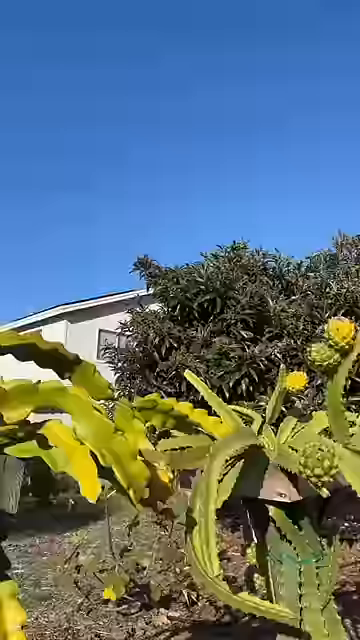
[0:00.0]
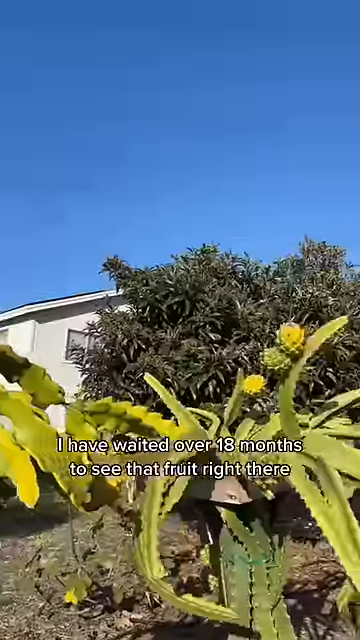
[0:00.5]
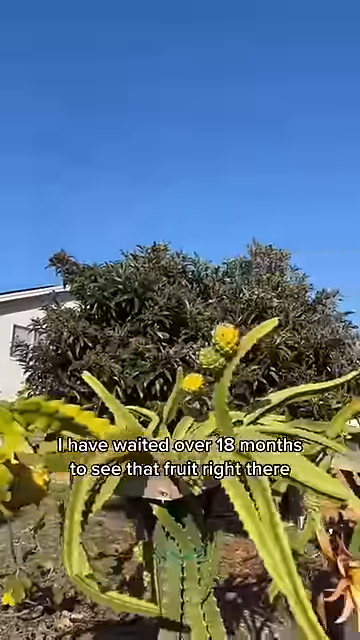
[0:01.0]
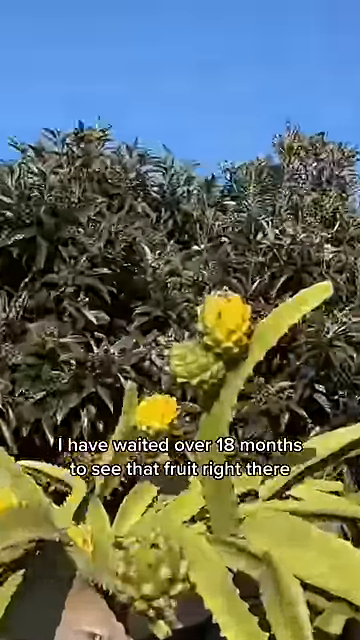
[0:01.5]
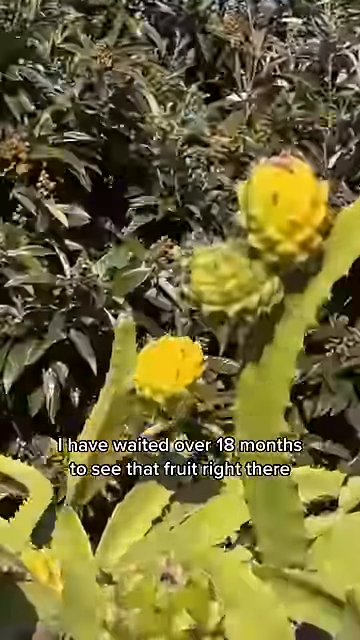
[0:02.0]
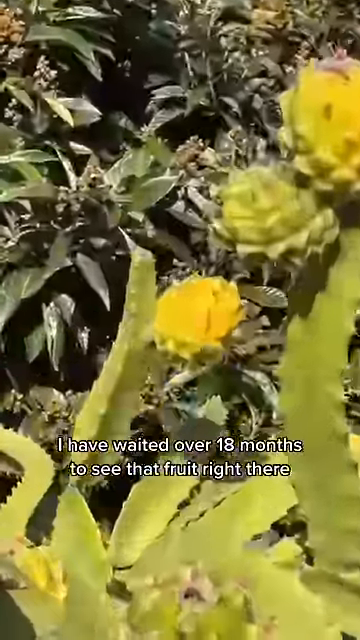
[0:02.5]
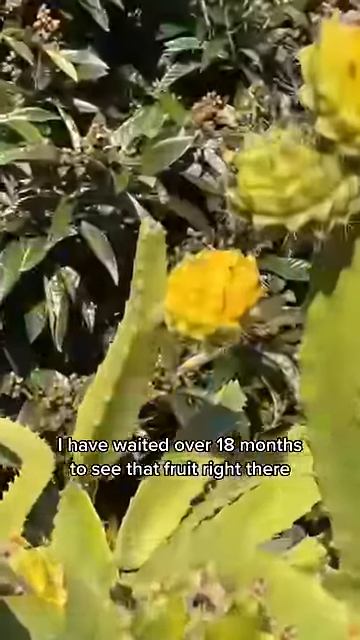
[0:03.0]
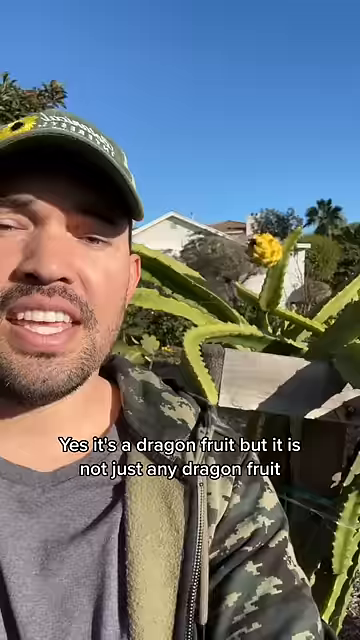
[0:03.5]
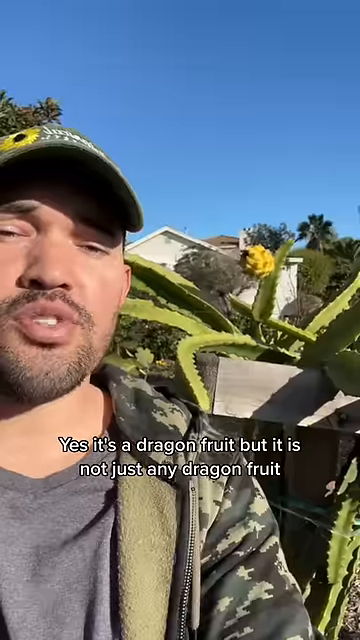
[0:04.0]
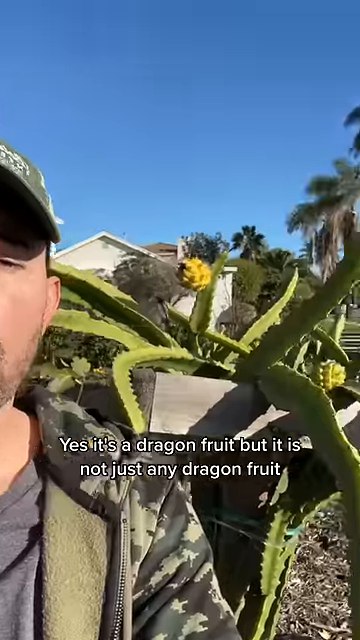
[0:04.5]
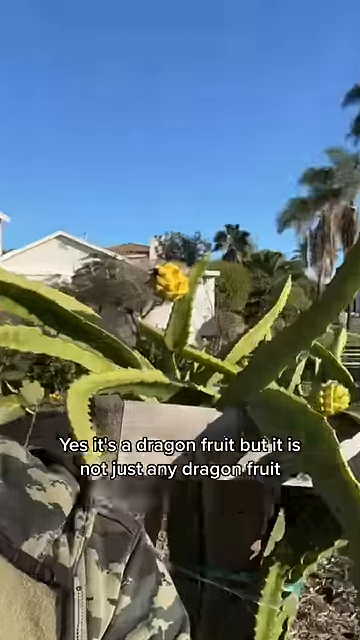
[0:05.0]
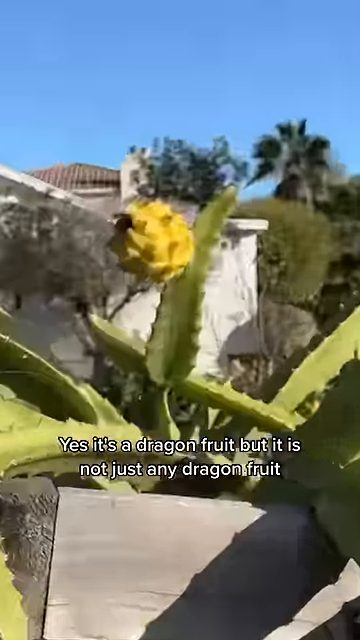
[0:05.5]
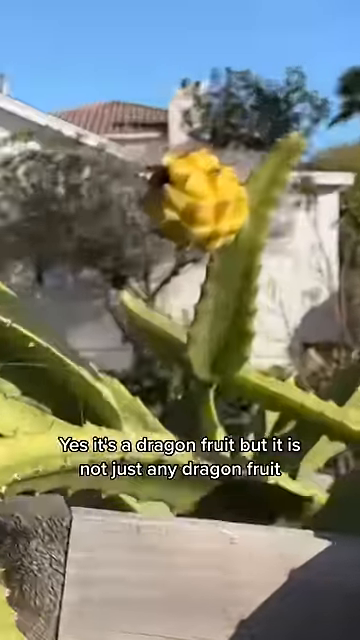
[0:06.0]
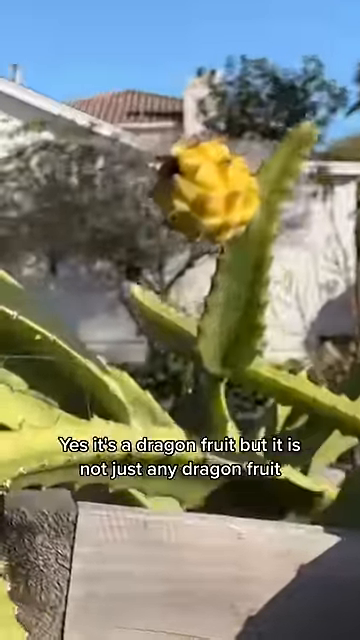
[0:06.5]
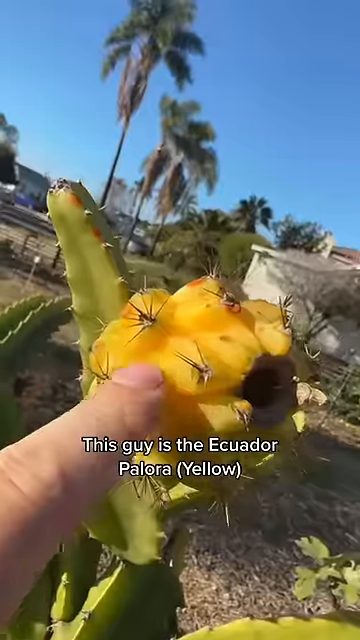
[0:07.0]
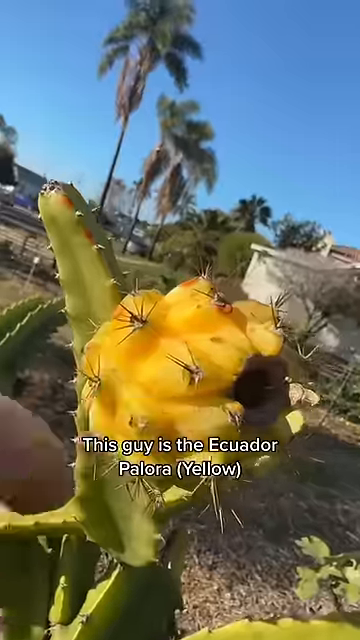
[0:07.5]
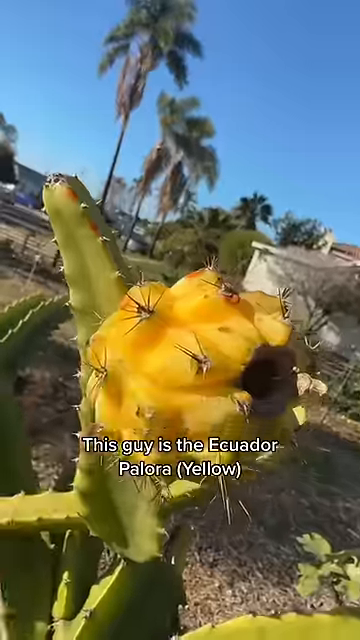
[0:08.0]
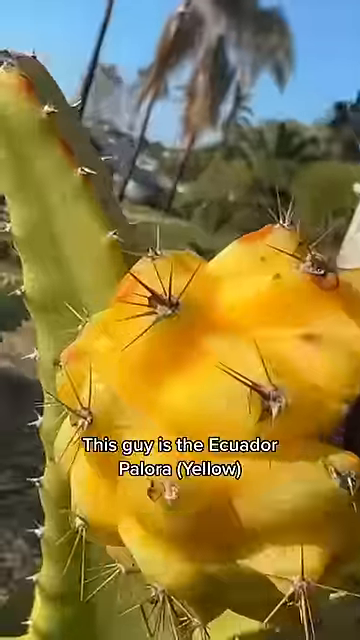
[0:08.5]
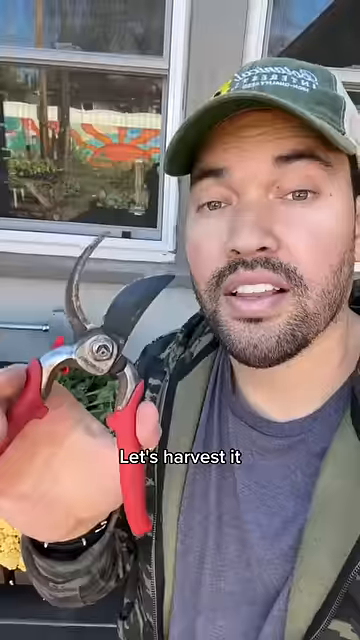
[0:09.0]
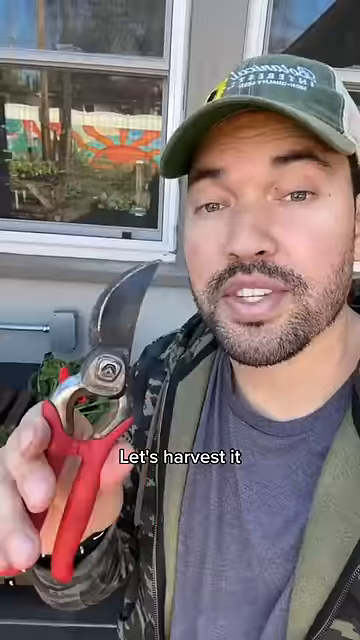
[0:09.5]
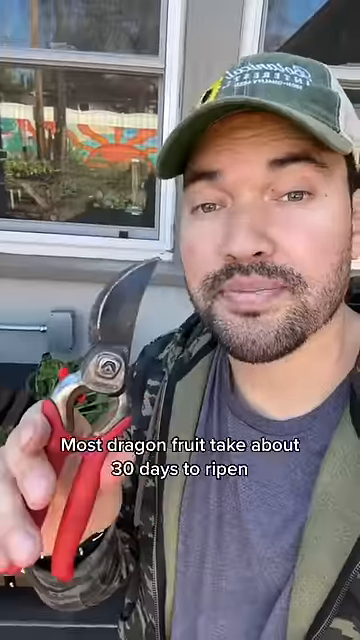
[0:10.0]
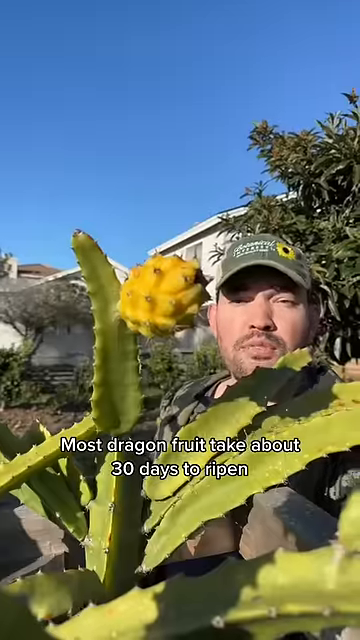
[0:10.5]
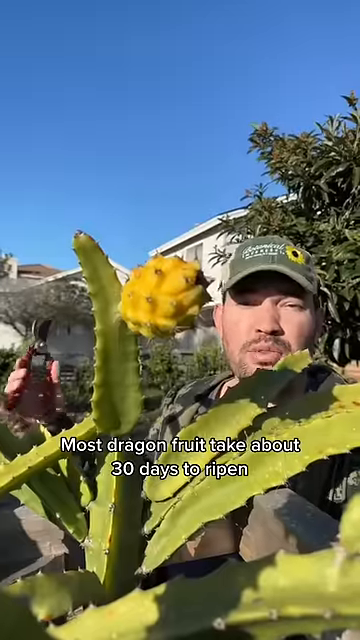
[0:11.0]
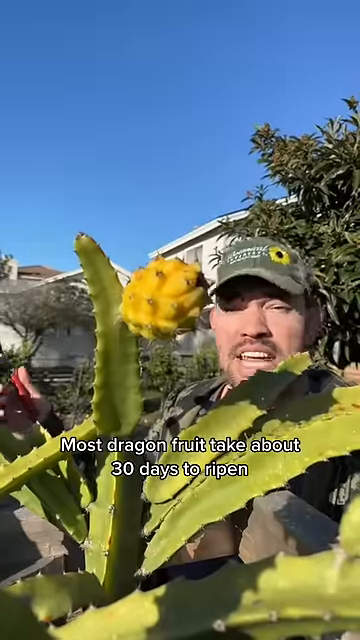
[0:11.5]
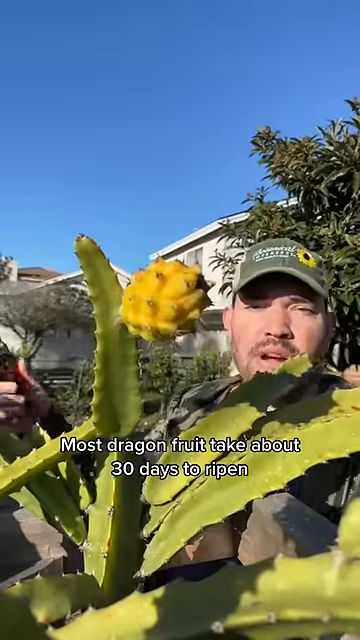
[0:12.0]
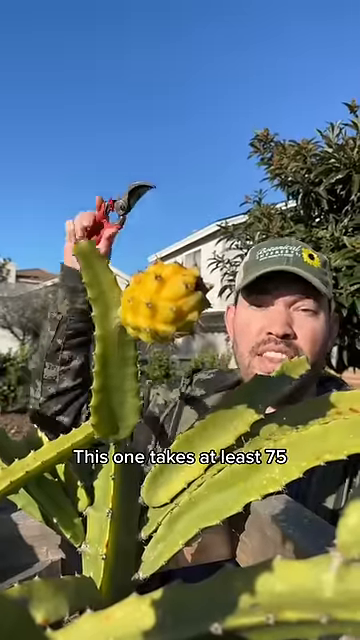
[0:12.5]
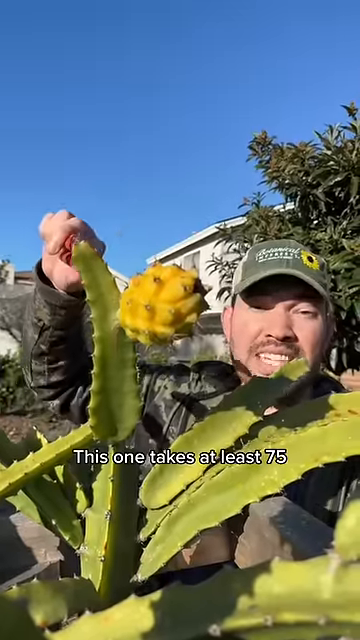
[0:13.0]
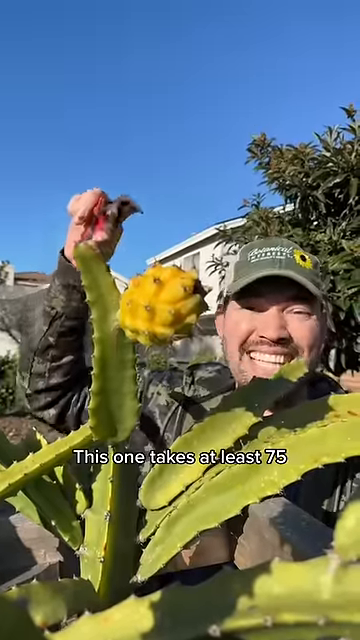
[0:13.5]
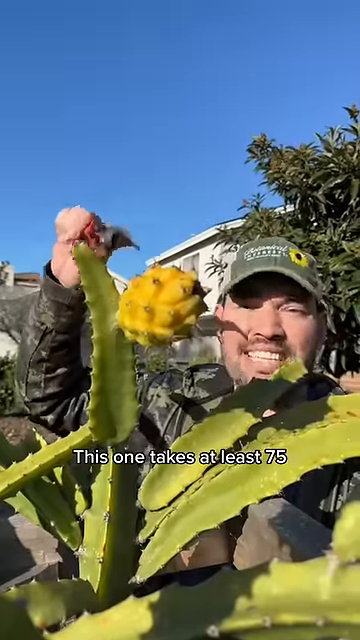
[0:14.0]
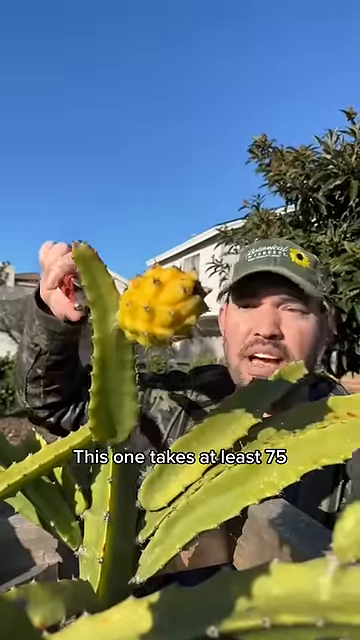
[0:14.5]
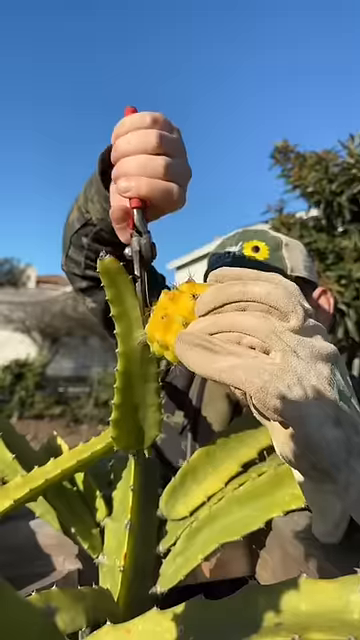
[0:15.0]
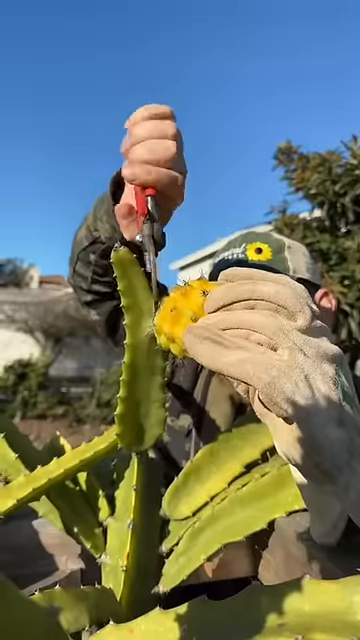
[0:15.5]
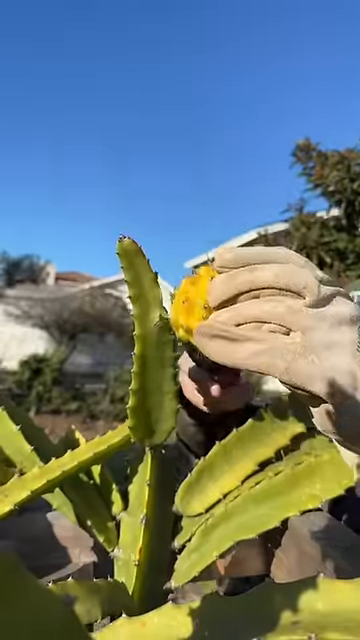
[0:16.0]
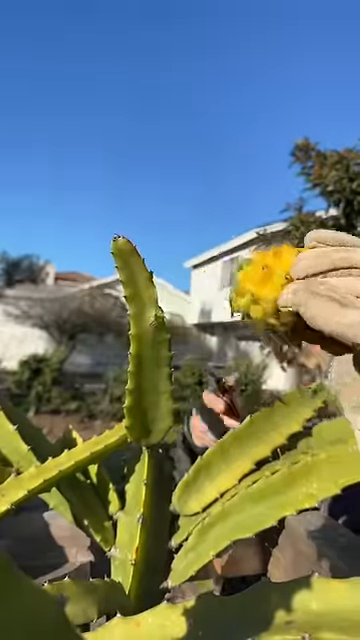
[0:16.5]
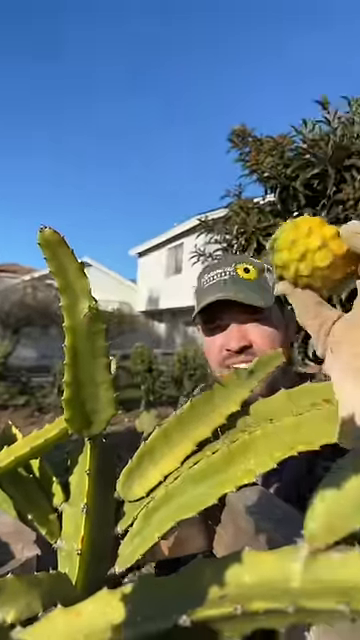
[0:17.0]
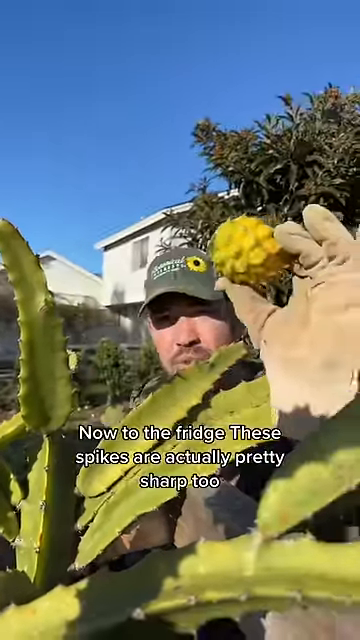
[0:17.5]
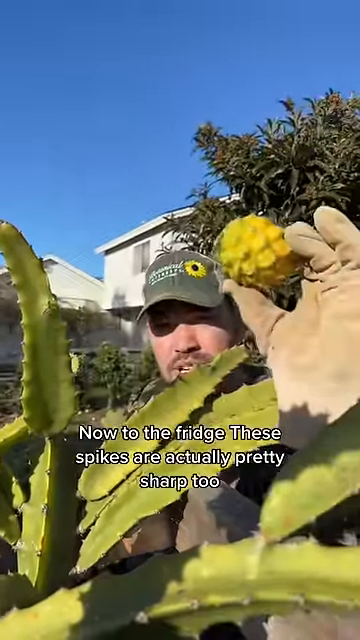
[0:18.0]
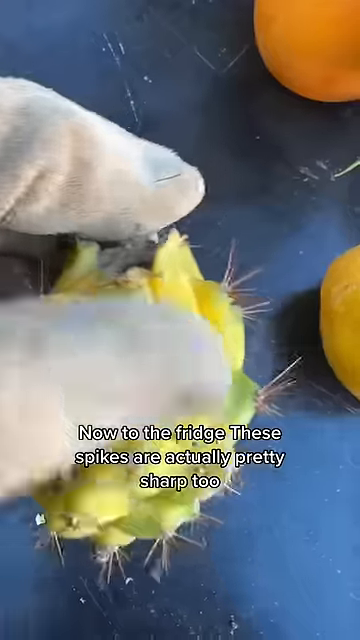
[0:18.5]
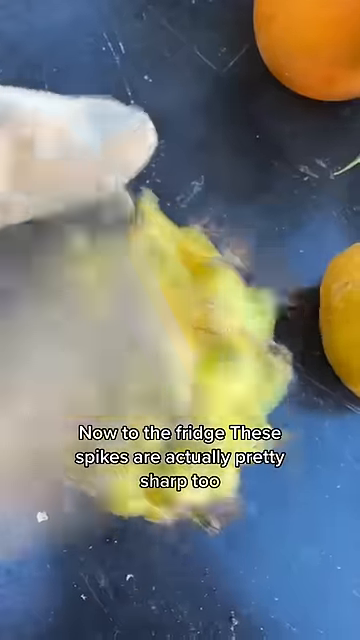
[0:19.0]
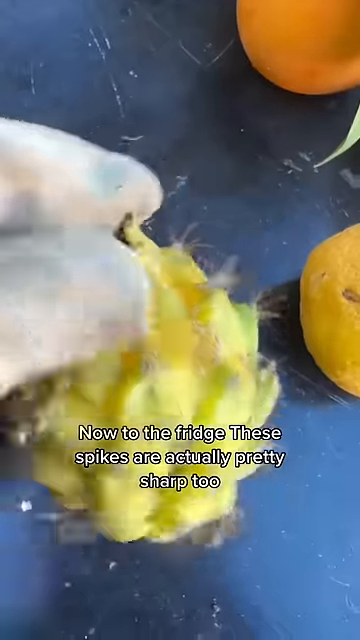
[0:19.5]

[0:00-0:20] A man is in his backyard garden. He is a white man, probably in his early 30s, with a short, dark beard, wearing a grey t-shirt, a camo hoodie jacket and a green hat. He shows his dragon fruit plant, kind of zooming in on a prickly yellow cactus-like plant growing in his backyard. White subtitles on the screen identify it as not just any dragon fruit but an Ecuador Palora (yellow) dragon fruit, and say he is getting ready to harvest it. He pulls out his gardening shears and grabs hold of the plant, wearing a work glove on his left hand to avoid the prickles, and kind of prunes the fruit off the cactus leaf. Next he zooms in on various other dragon fruit plants in his backyard.